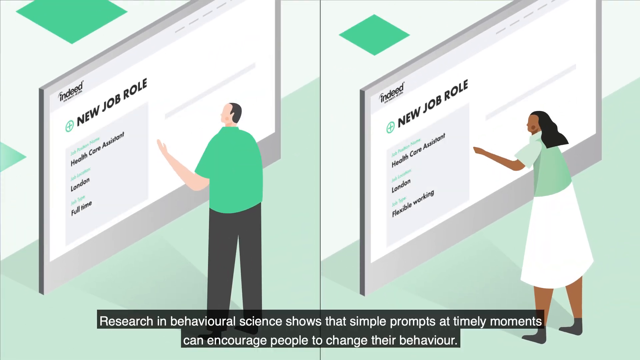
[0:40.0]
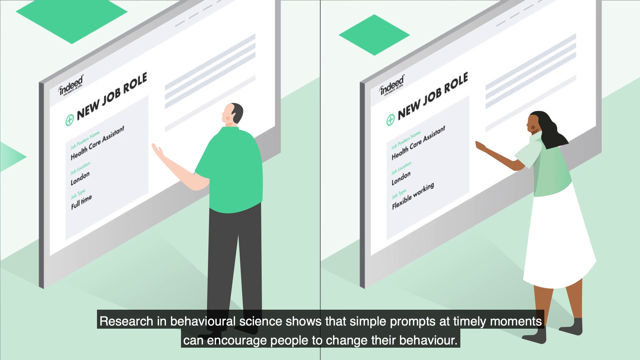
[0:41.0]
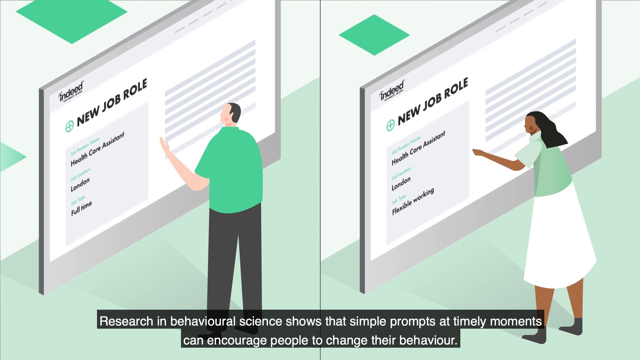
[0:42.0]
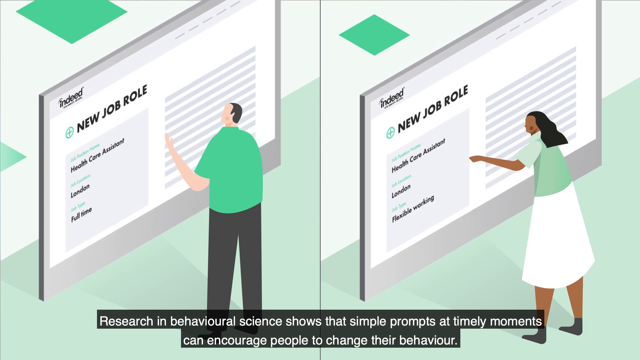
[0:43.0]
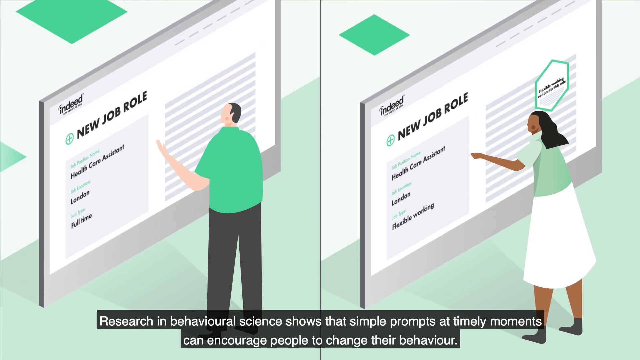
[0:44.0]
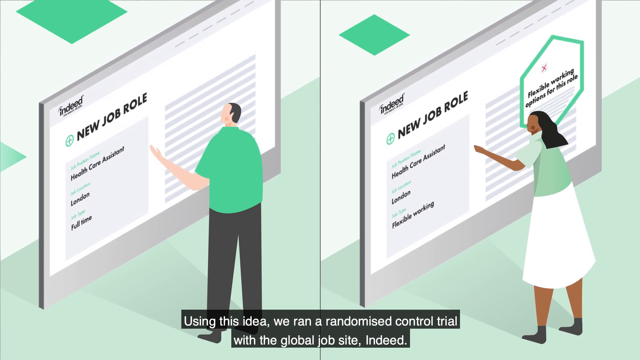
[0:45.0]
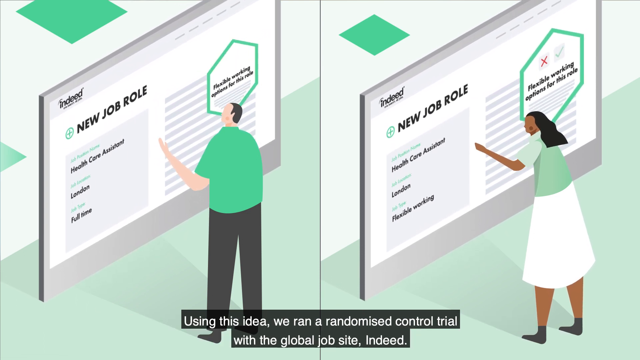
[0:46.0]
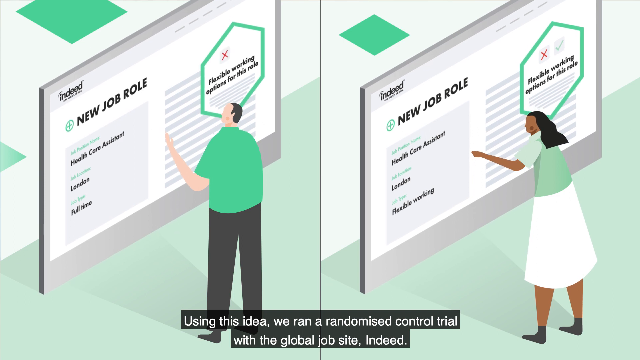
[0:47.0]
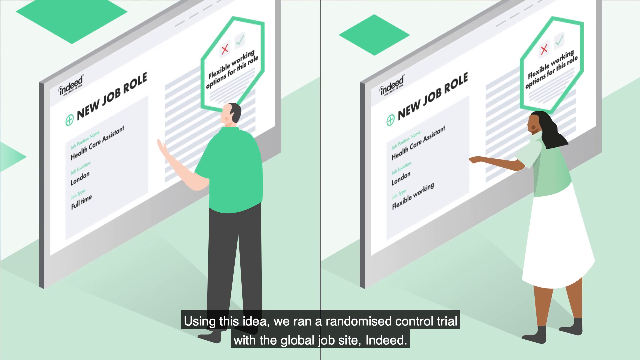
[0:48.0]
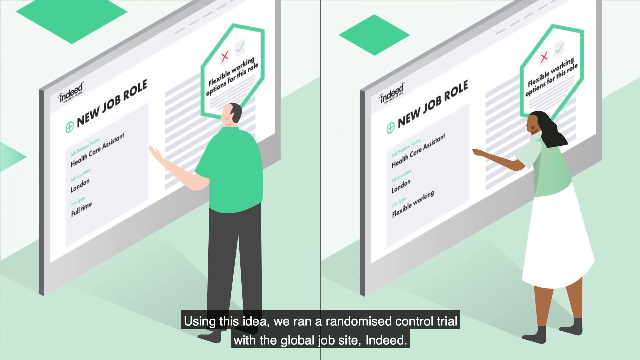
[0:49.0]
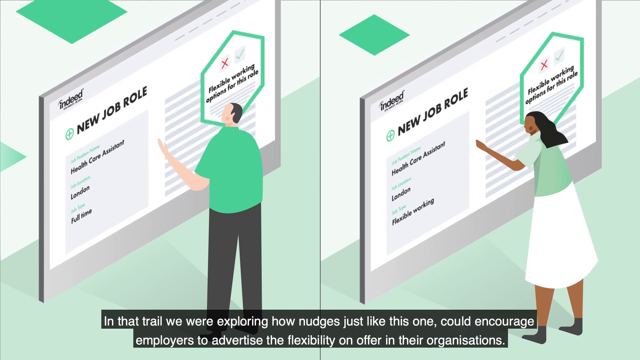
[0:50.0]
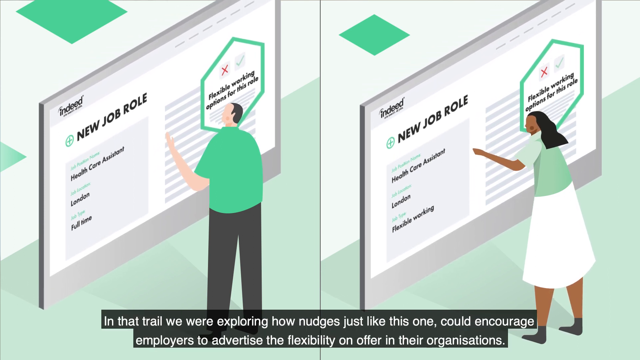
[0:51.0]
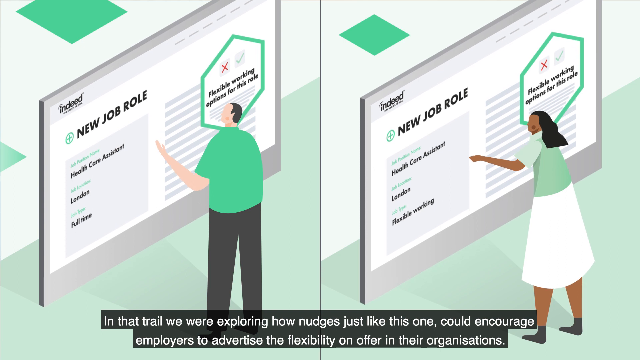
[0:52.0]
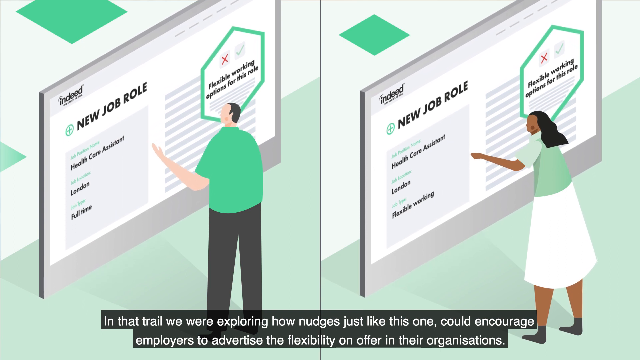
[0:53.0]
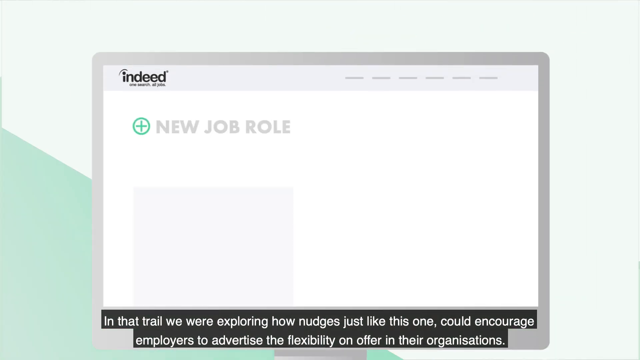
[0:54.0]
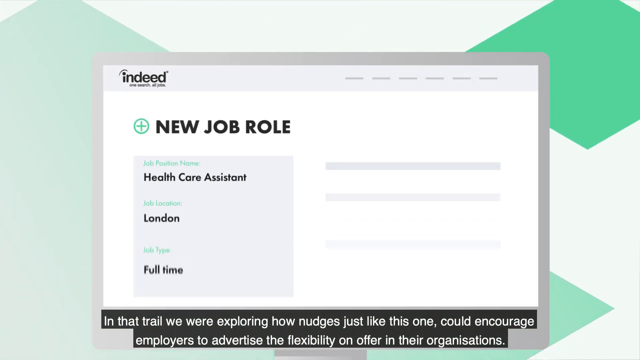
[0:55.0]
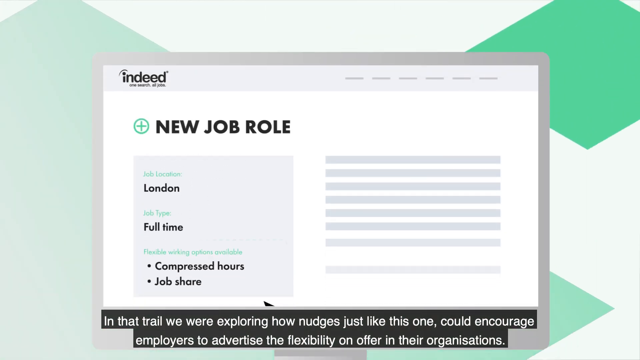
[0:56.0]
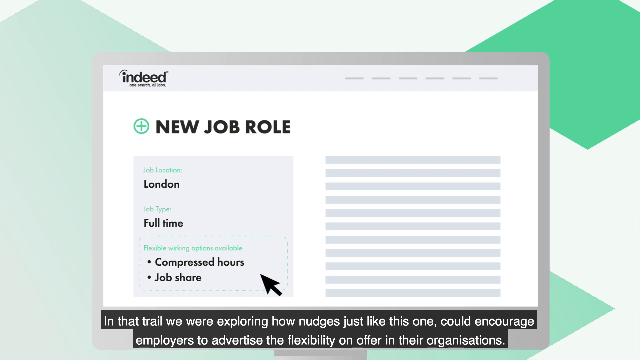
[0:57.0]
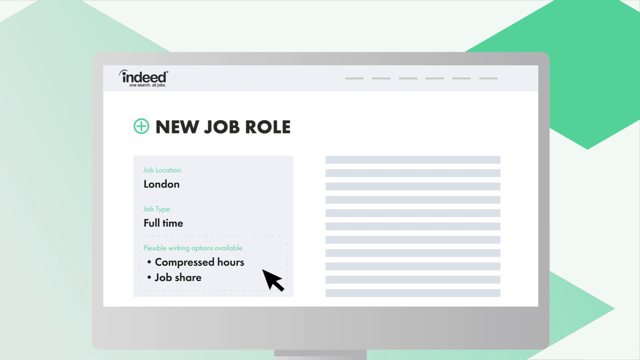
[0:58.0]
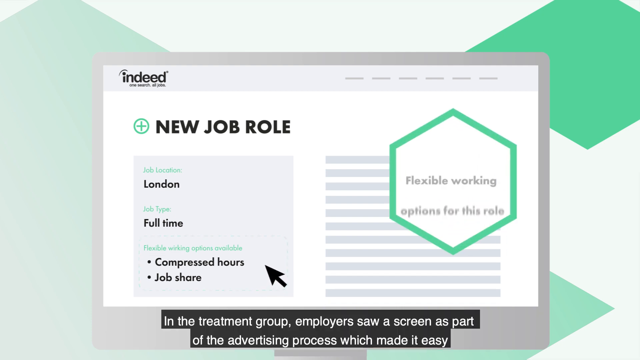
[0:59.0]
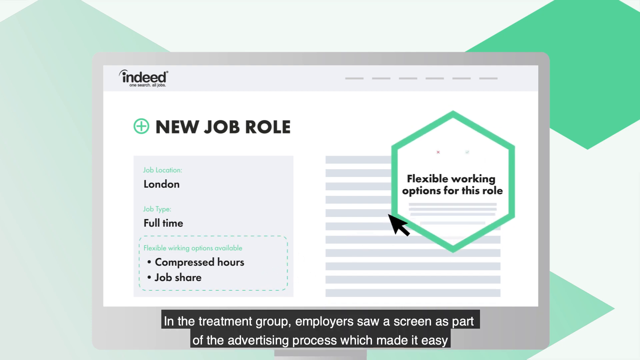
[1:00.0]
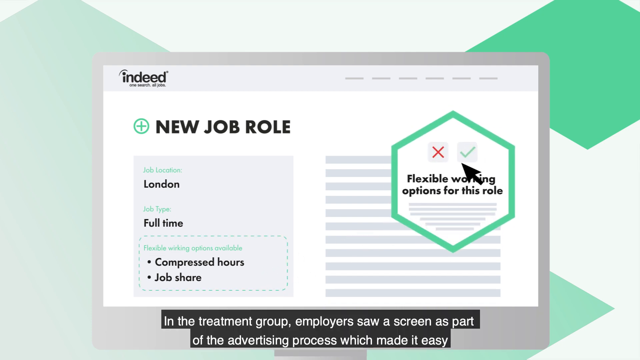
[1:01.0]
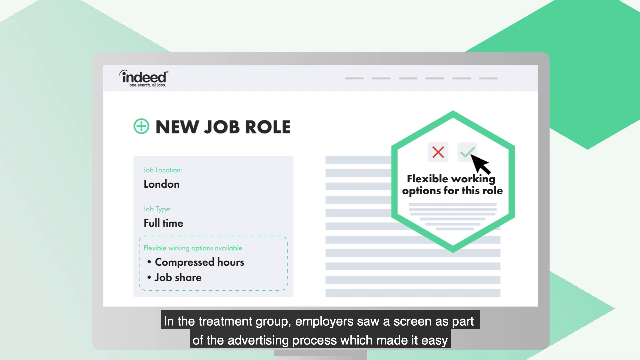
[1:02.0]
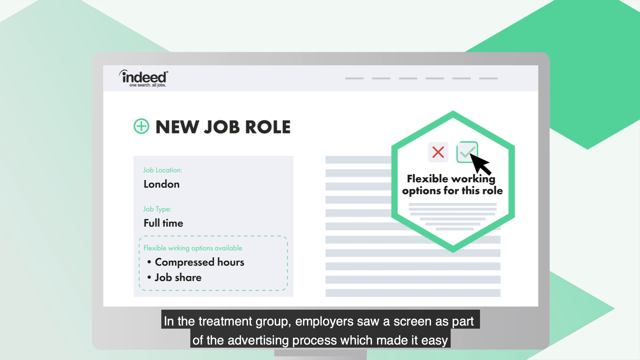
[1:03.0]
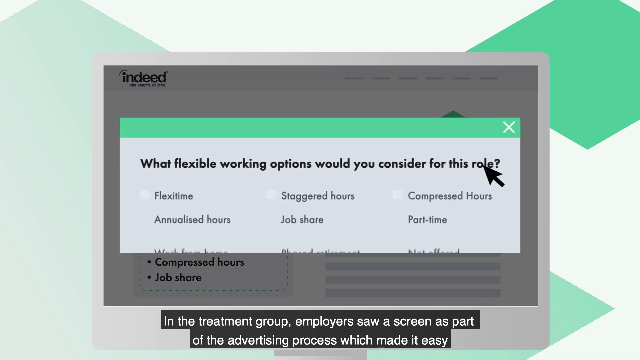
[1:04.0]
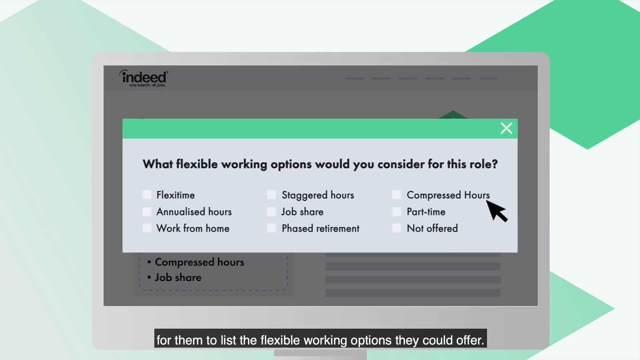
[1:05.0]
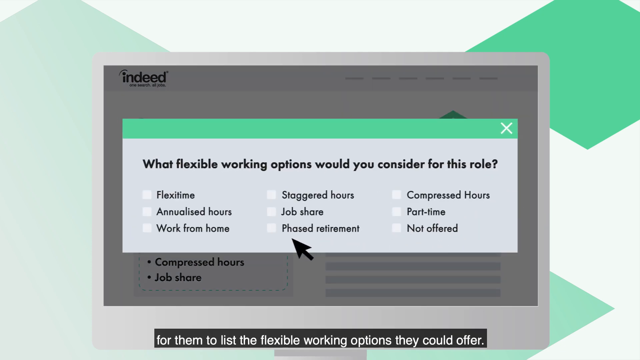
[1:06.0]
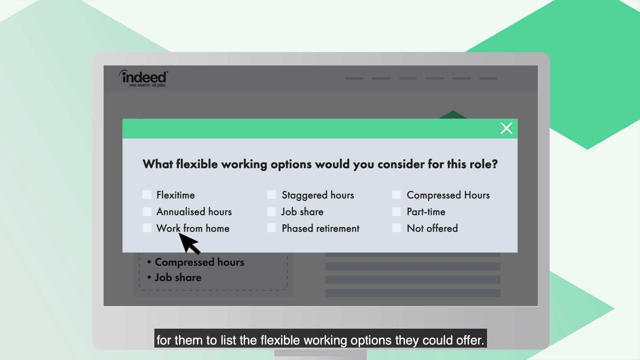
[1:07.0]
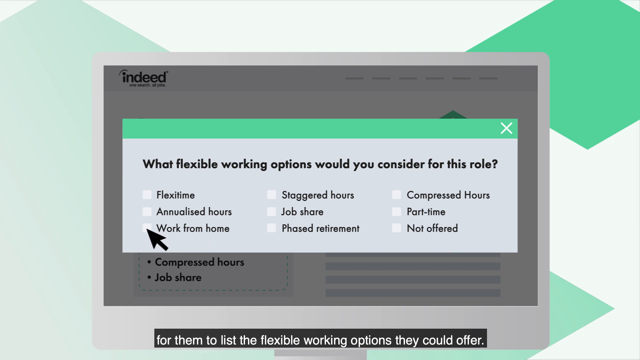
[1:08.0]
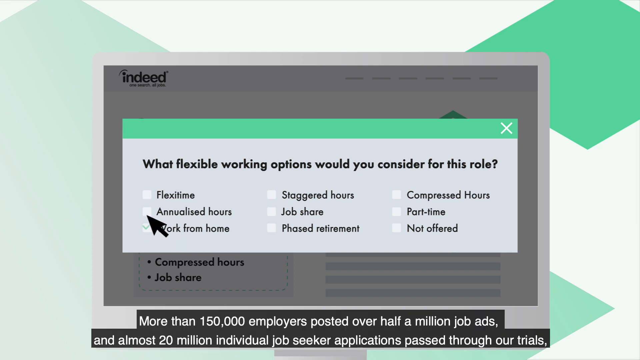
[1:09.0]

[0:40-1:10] In this ad, a man in a green shirt appears on the left and a woman in a lighter mint green shirt on the right, in front of large cartoon digital boards relating to Indeed. Captions run along the bottom about randomized trials Indeed did with participating employers, their results and how many people participated. One reads "they ran a randomized control trial, using Indeed, they were exploring how nudges could encourage employers to advertise the flexibility that their organizations offer." A fake simulated laptop screen comes up showing "Indeed" and "new job role," and a small black mouse cursor appears to the left of it. The caption reads "in the treatment group, employers saw a screen as part of the advertising process, which made it easy." The cursor moves and the screen shows "flexible working options for this role." The cursor continues to explore the fake site and hovers over a work from home option in a menu of flexible working options that has popped up in the center of the fake laptop. The caption reads "more than 150,000 employers posted half a million job ads and almost 20 million individual job seeker applications passed through our trials." The cursor also goes through the flex time option.